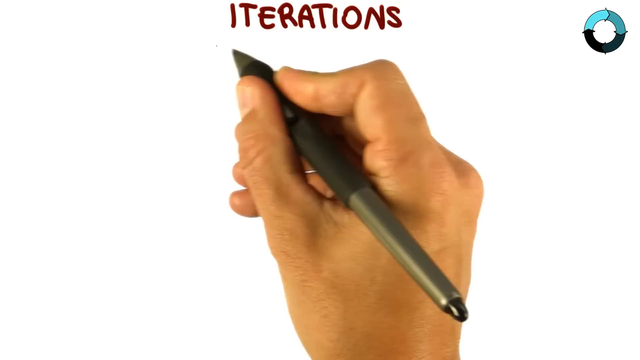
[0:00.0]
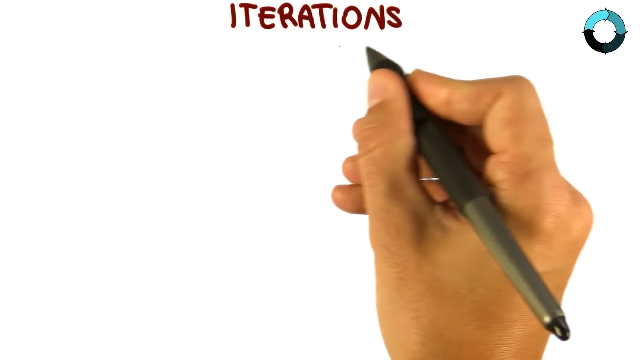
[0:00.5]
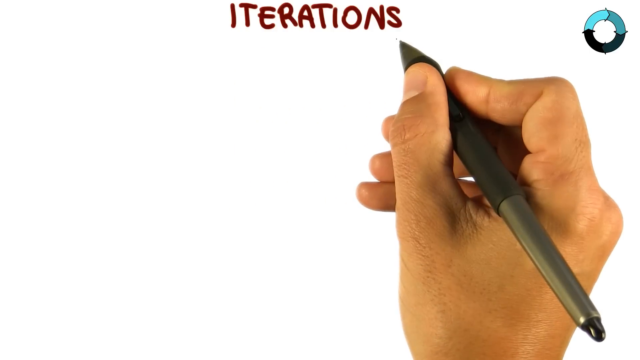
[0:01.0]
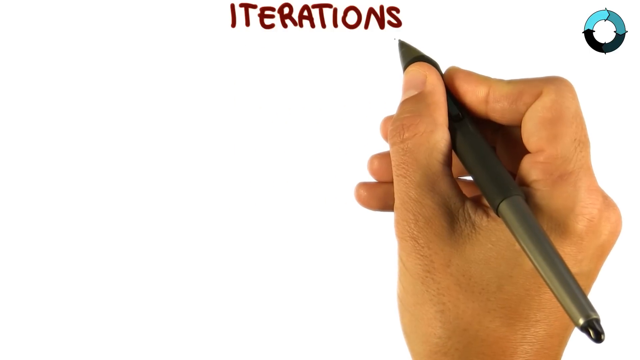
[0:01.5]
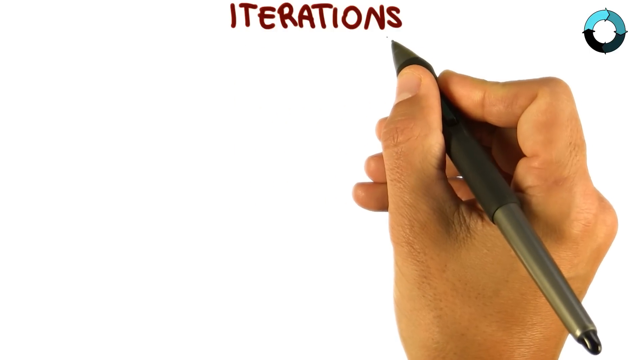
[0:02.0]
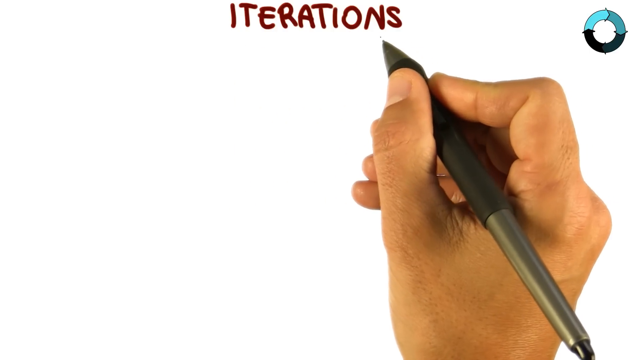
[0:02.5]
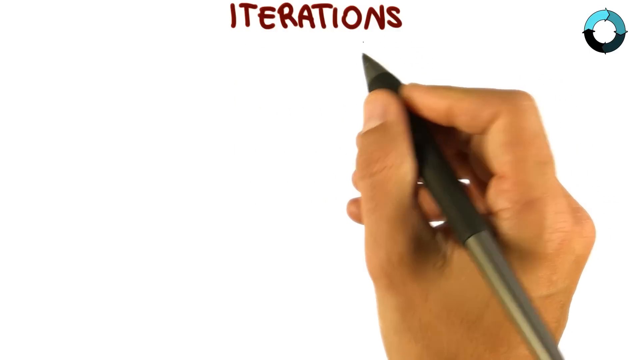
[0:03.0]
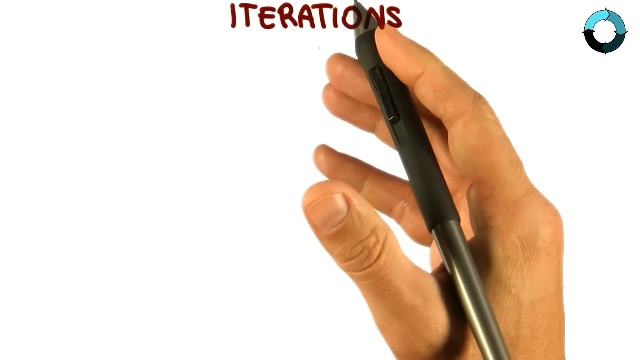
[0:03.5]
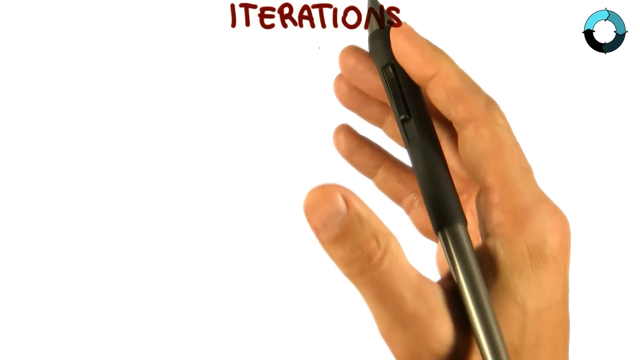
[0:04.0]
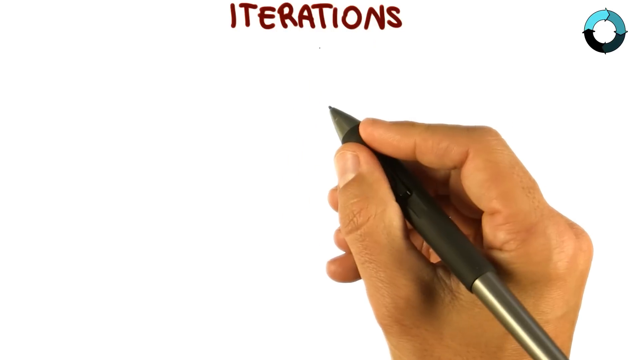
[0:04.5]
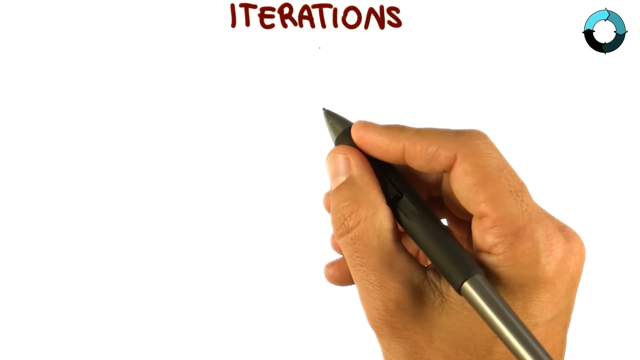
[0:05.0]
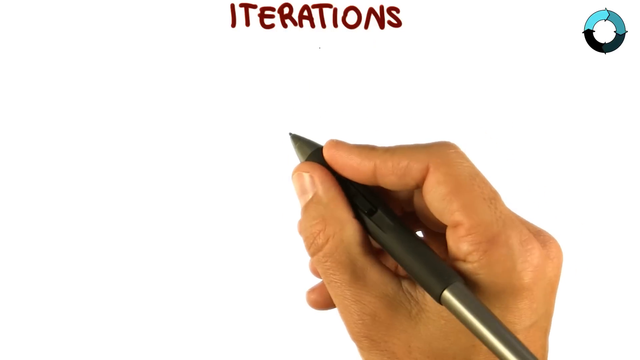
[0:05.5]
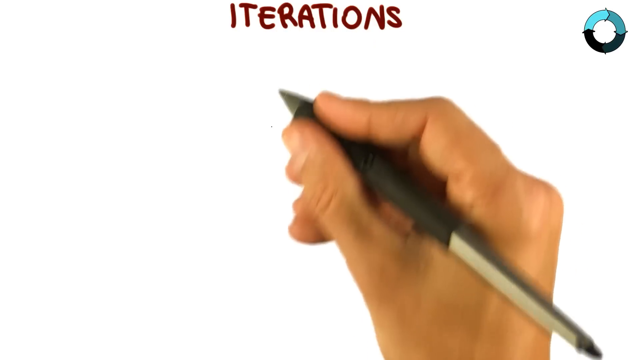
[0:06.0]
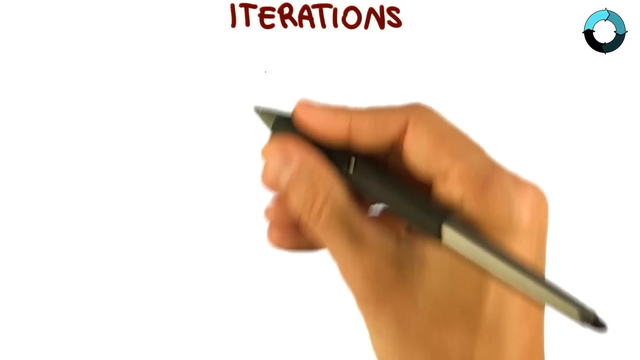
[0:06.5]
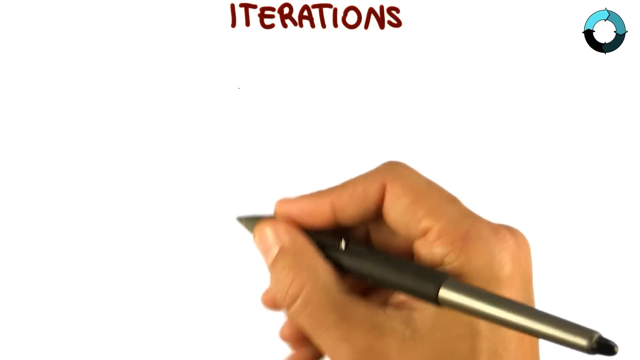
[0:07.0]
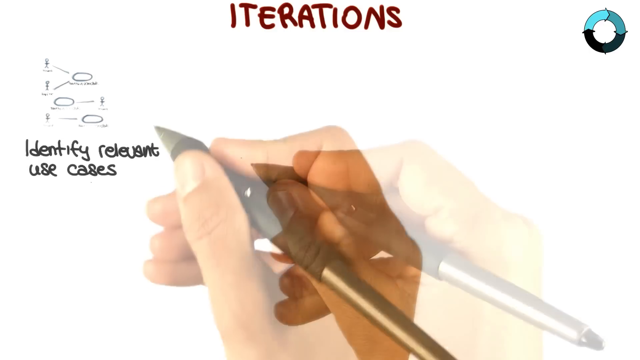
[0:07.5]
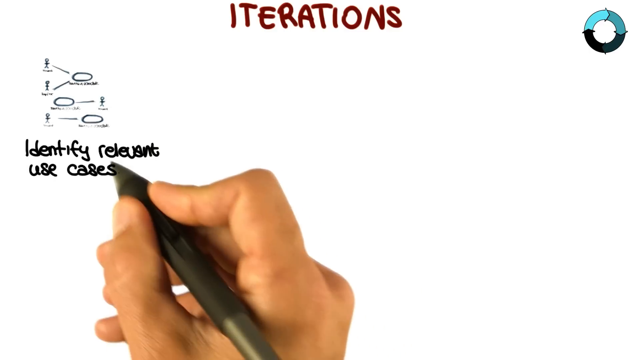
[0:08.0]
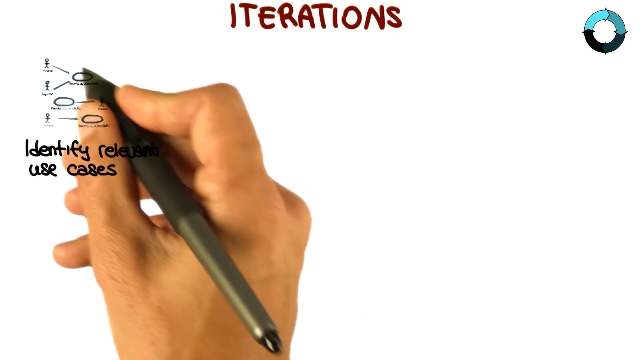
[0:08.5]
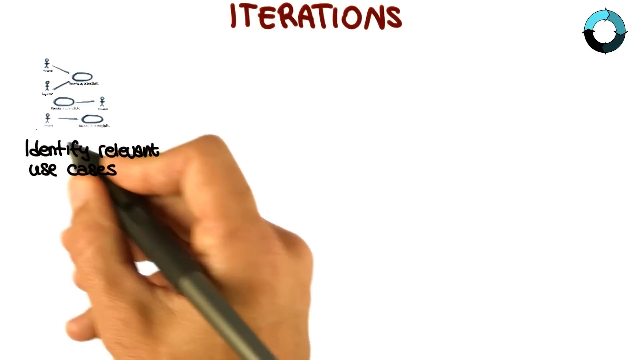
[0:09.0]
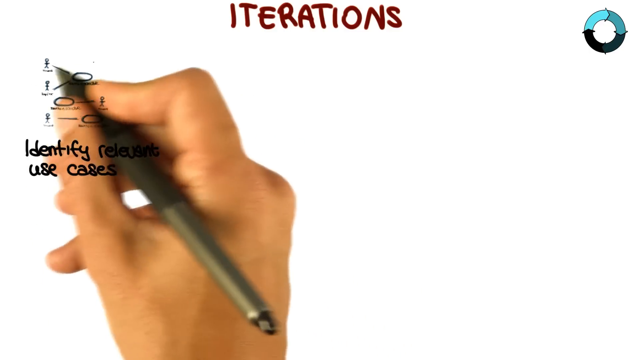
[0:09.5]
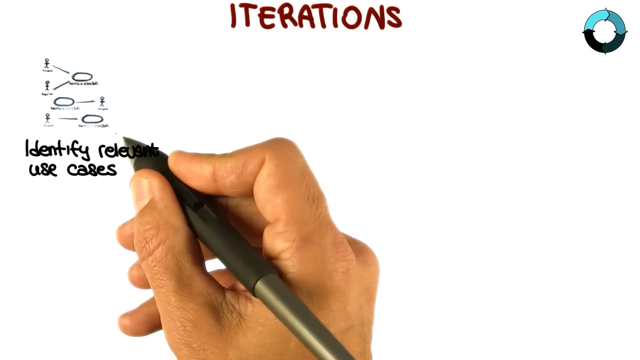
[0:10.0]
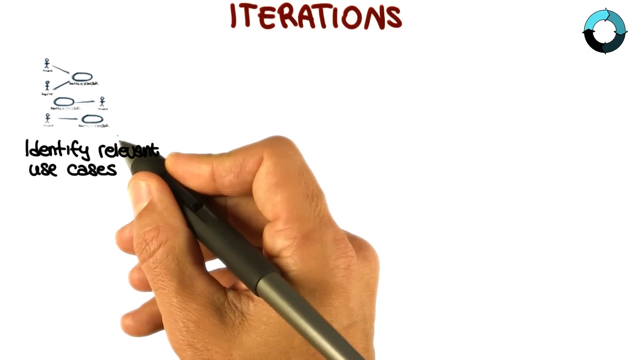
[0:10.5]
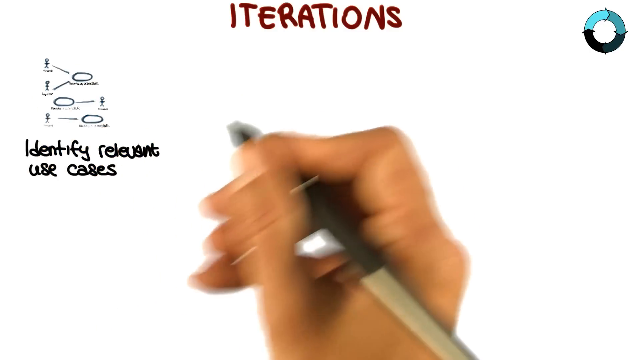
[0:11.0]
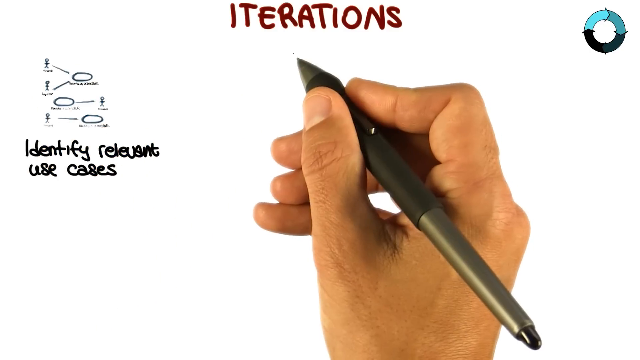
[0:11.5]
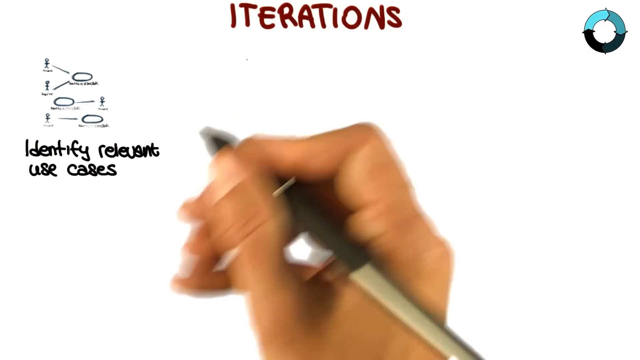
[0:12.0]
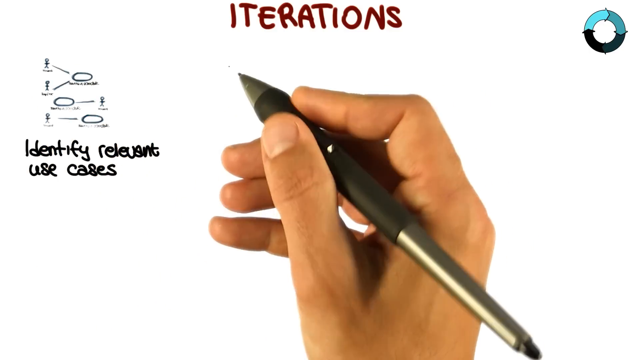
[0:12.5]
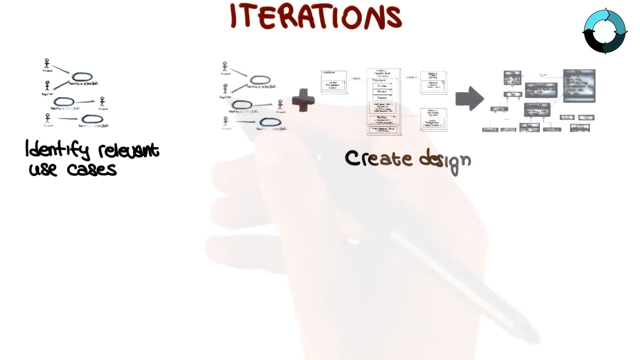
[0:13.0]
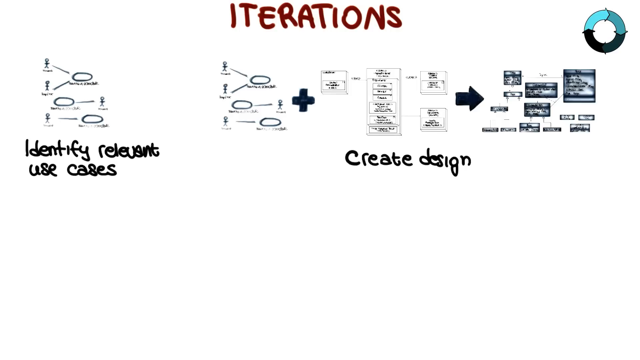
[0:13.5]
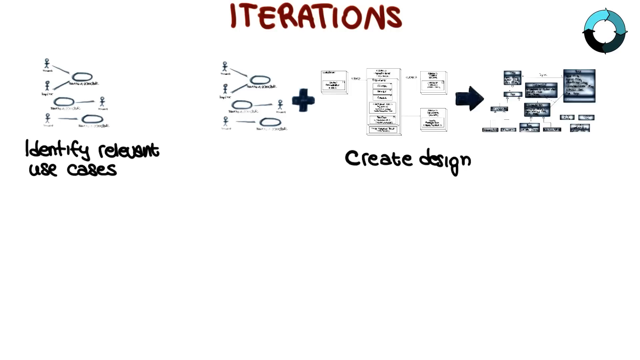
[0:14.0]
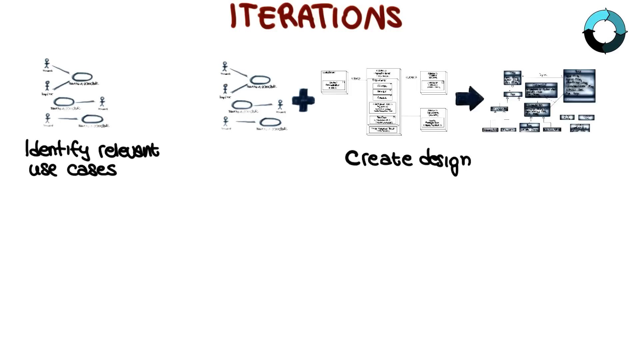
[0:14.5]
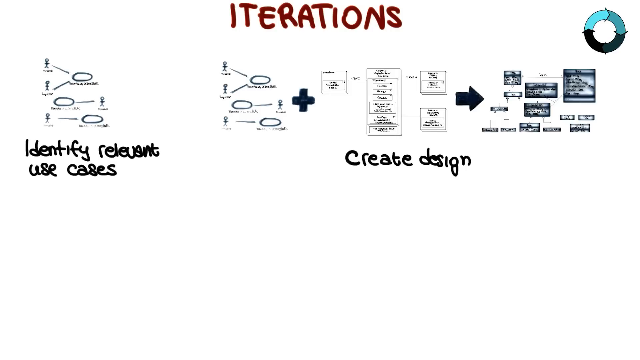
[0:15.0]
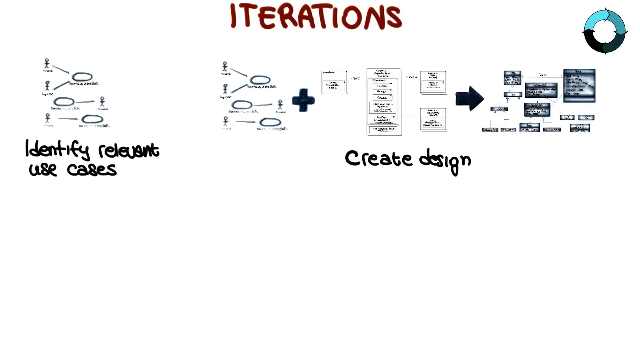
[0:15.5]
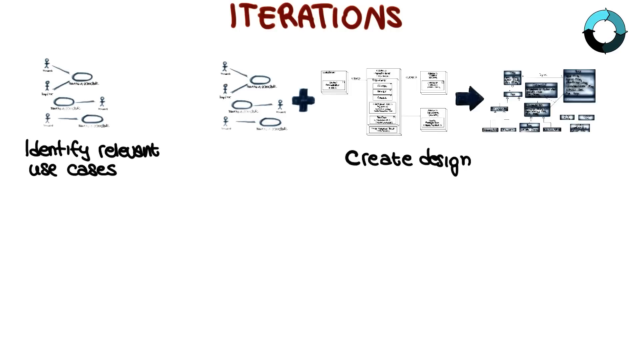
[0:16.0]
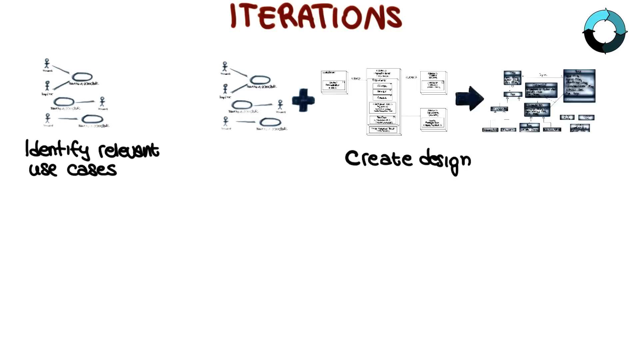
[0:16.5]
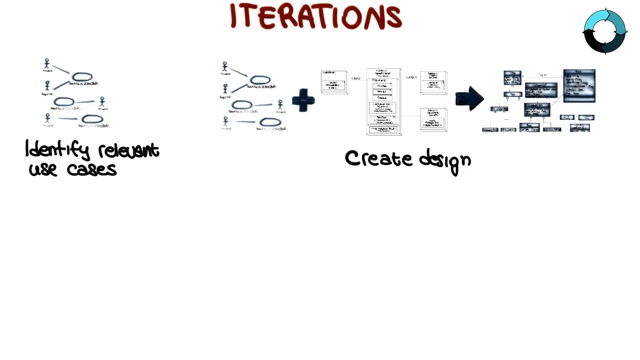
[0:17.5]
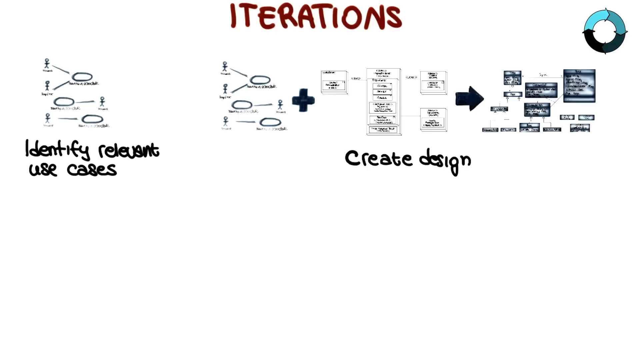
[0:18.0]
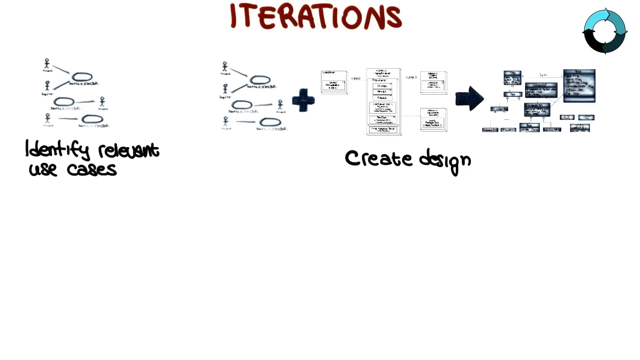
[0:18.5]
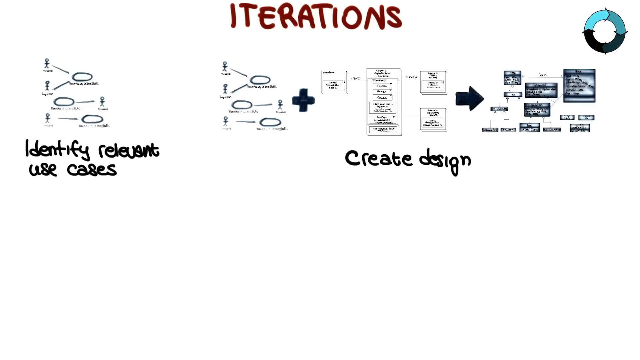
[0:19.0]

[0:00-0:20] A hand is overlaid on a white background; its skin is kind of tan, maybe an olive skin color. The hand holds a touchscreen stylus pen that is a kind of metallic gray, with more ergonomic handle bits. At the top of the screen, the word "iterations" appears in a dark red font. The pen moves as if to underline the word but does not actually do so, then moves around the screen. A diagram appears on the left side of the screen with black handwriting underneath it that reads "identify relevant use cases." The pen makes a circling motion around it without actually circling it. To the left of that, a larger diagram appears that includes the first diagram along with some other pieces, labeled in handwriting "create design." The diagrams are quite small and hard to make out, but this one appears to be some kind of step-by-step diagram, perhaps of a process to create a design.